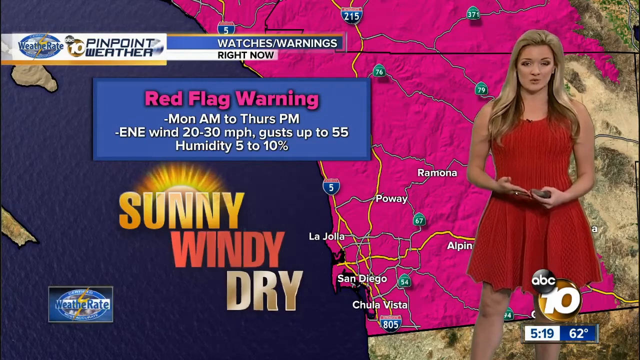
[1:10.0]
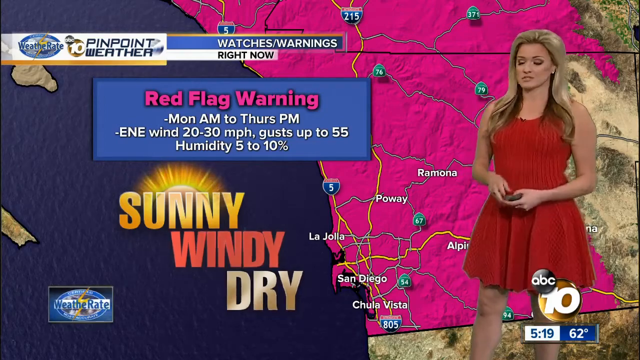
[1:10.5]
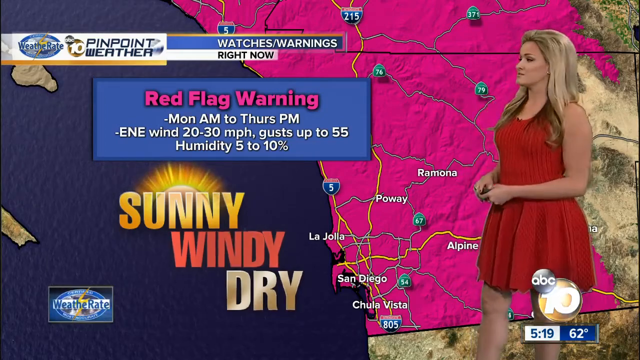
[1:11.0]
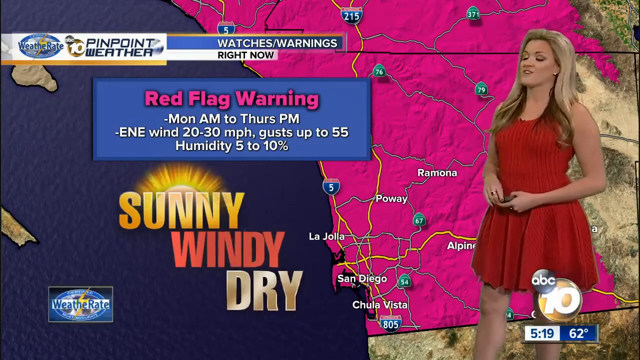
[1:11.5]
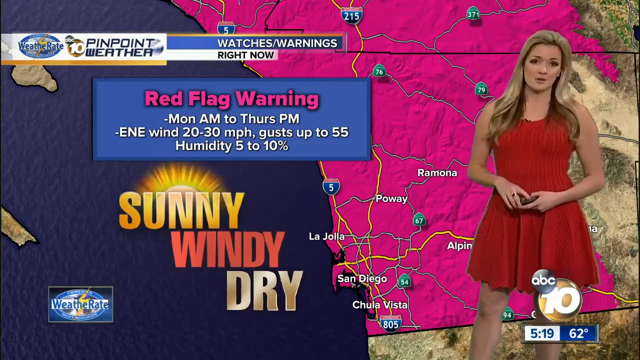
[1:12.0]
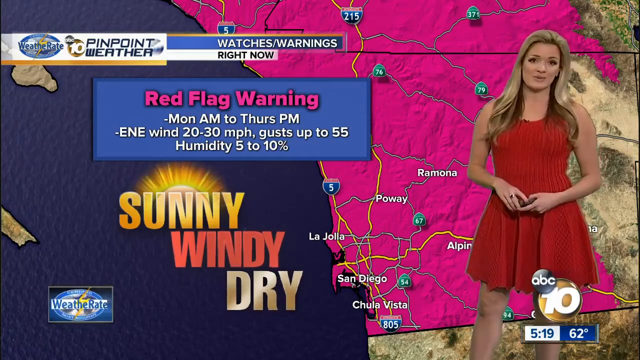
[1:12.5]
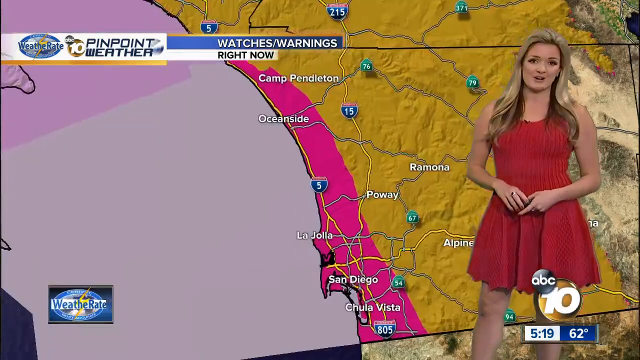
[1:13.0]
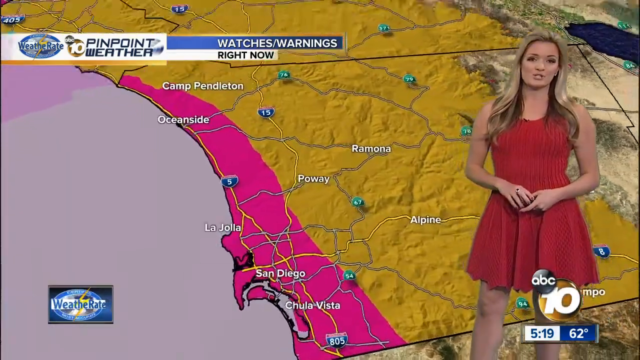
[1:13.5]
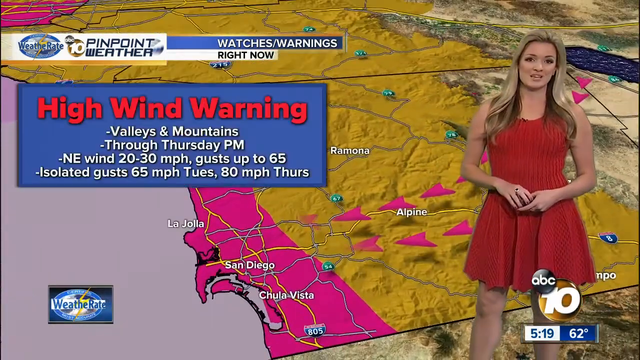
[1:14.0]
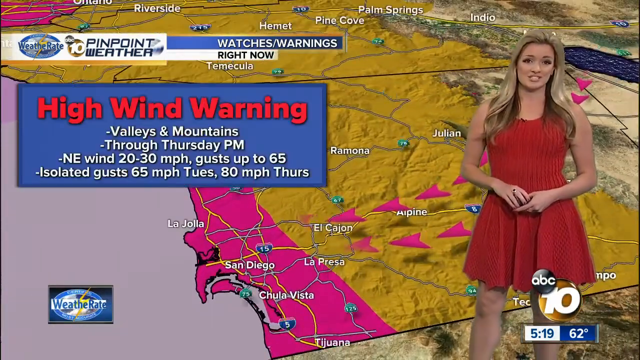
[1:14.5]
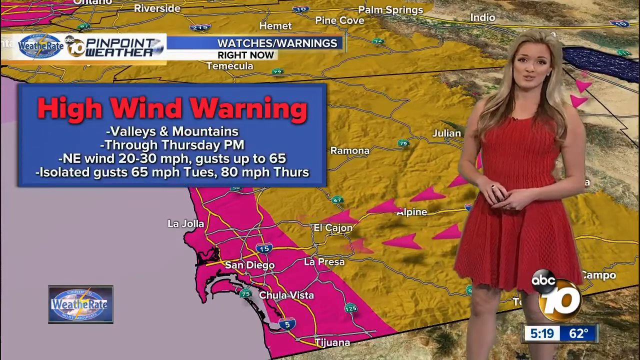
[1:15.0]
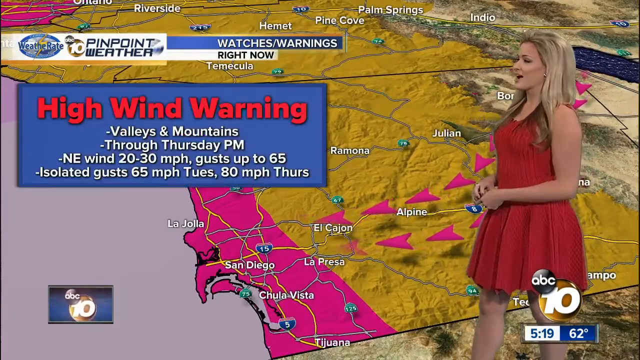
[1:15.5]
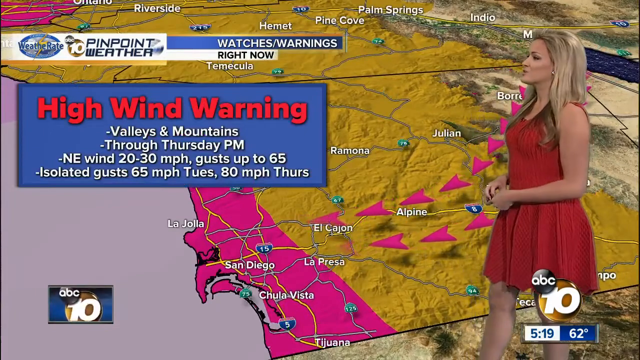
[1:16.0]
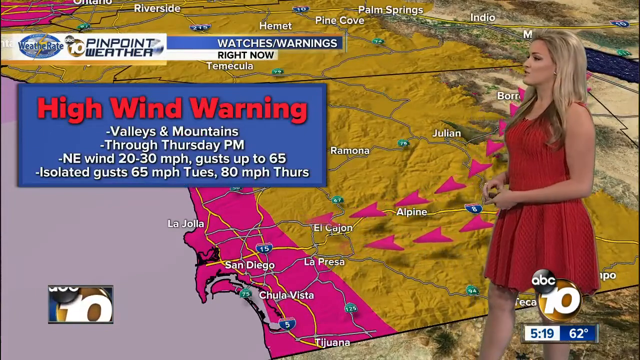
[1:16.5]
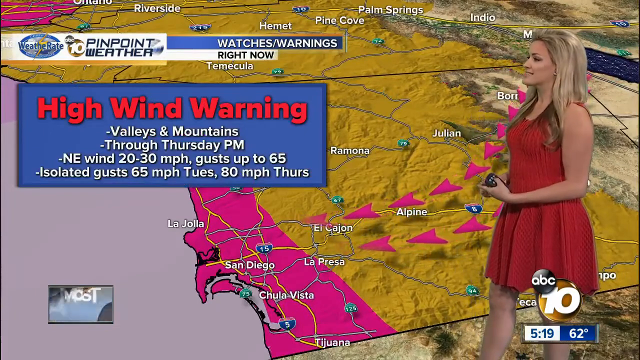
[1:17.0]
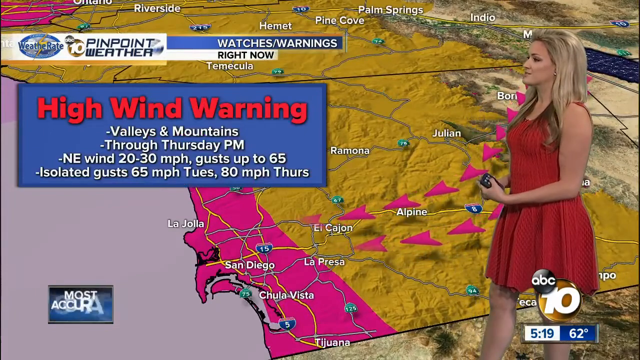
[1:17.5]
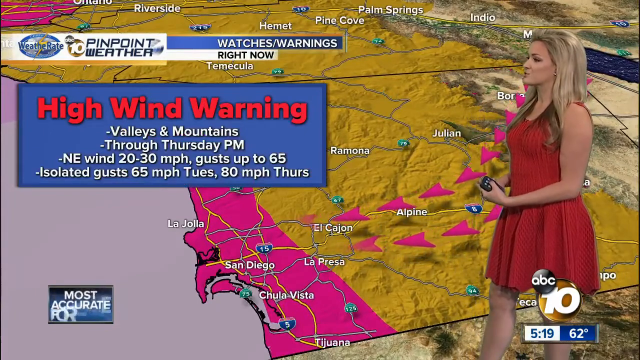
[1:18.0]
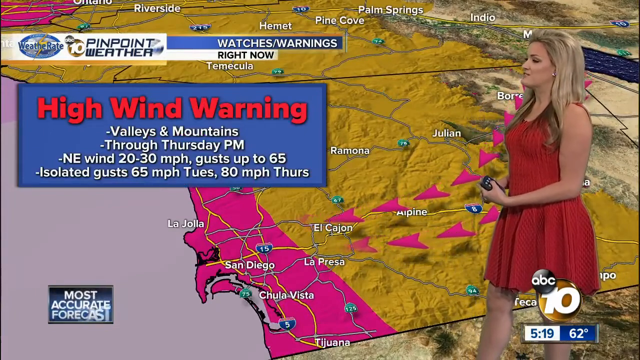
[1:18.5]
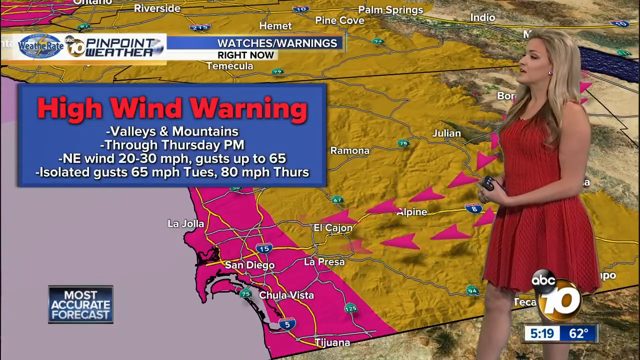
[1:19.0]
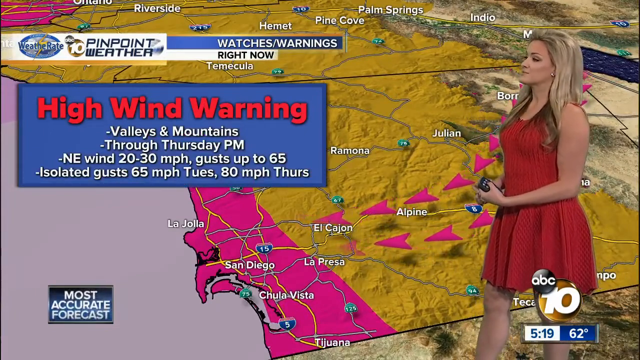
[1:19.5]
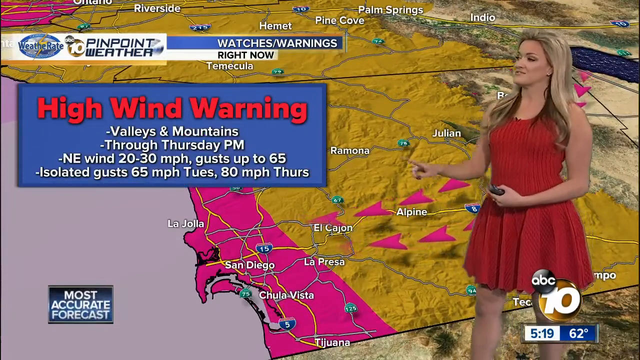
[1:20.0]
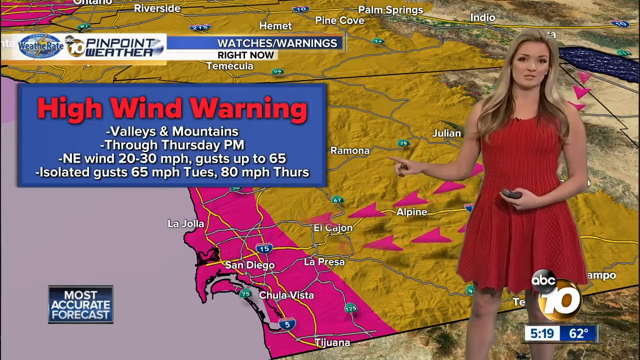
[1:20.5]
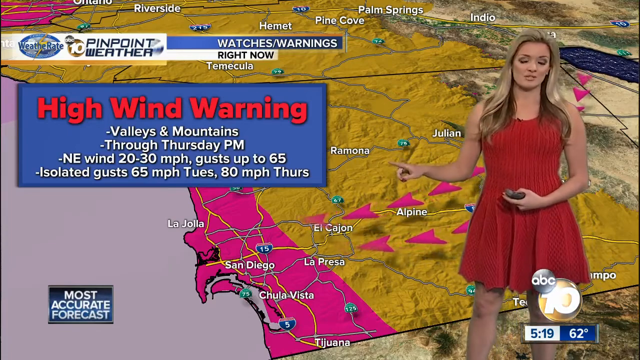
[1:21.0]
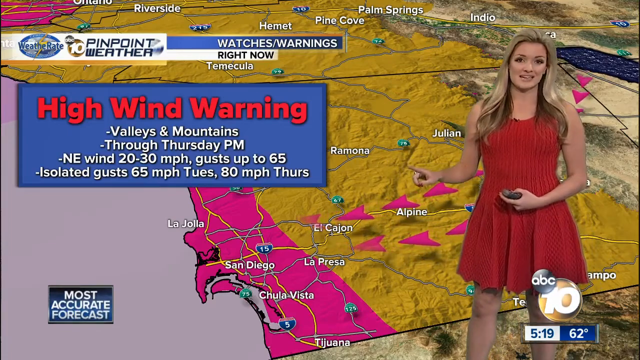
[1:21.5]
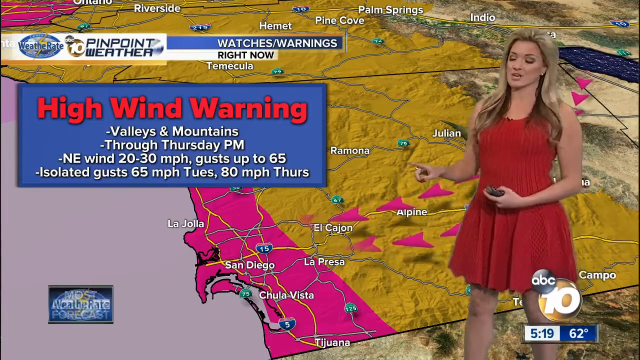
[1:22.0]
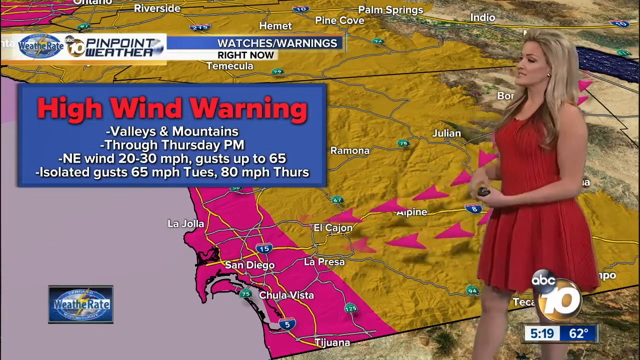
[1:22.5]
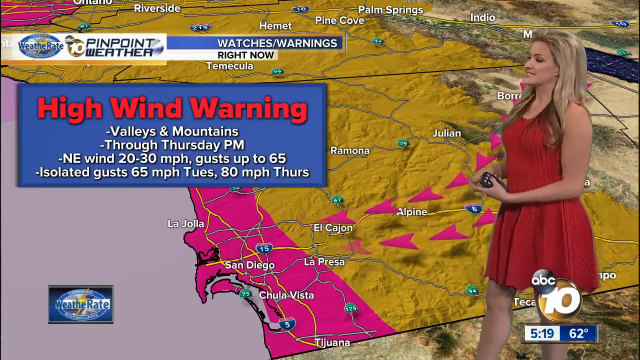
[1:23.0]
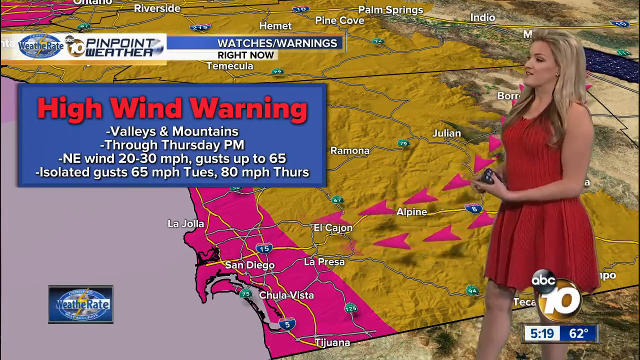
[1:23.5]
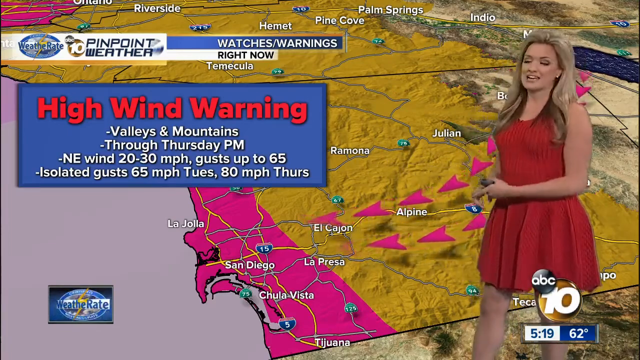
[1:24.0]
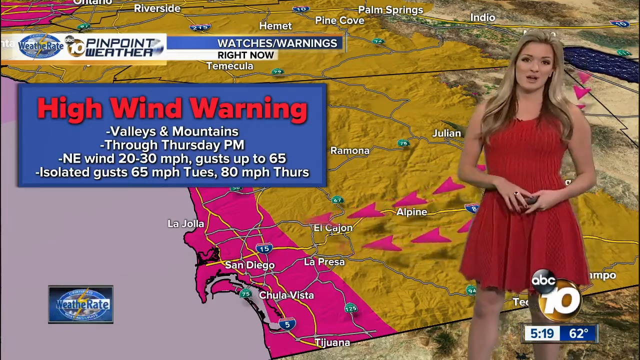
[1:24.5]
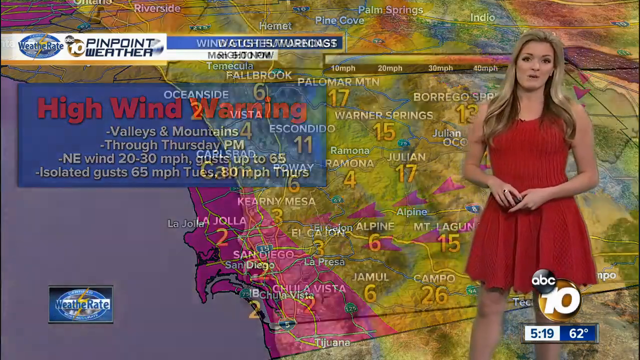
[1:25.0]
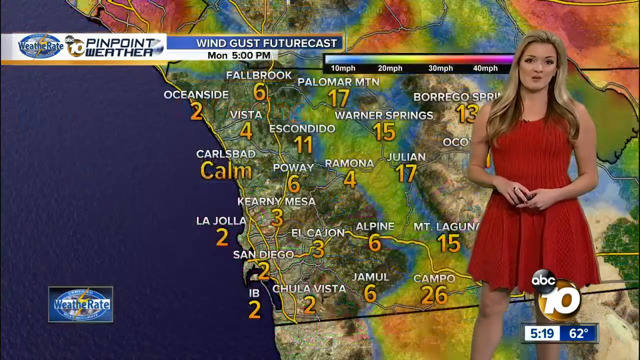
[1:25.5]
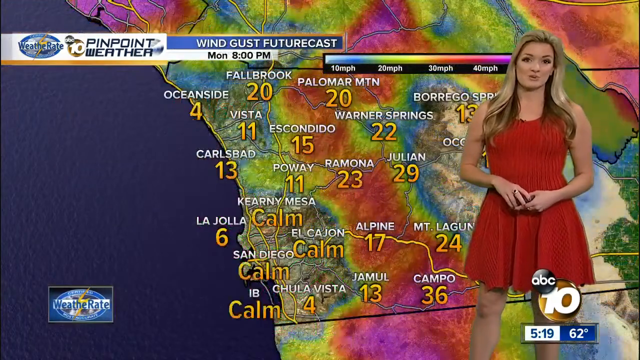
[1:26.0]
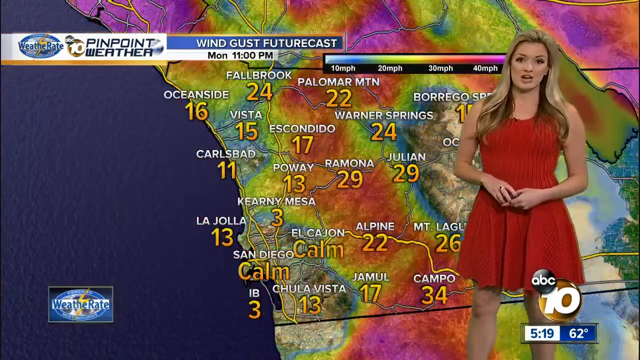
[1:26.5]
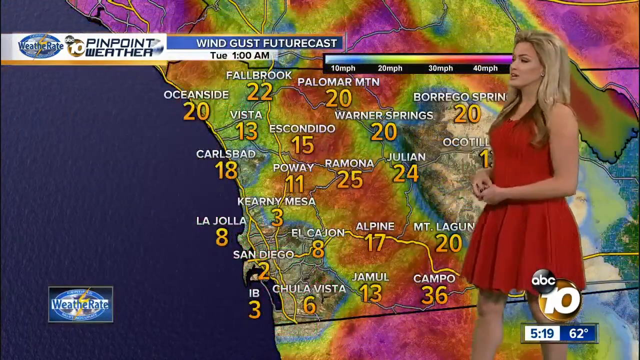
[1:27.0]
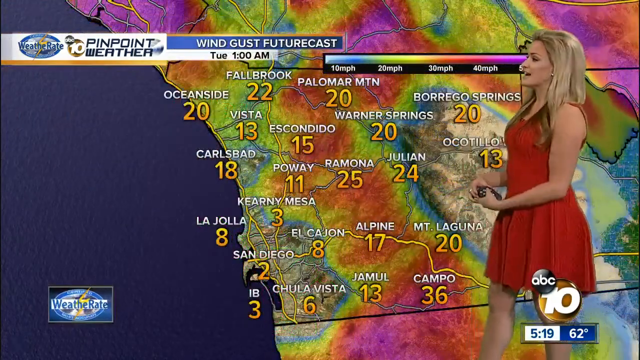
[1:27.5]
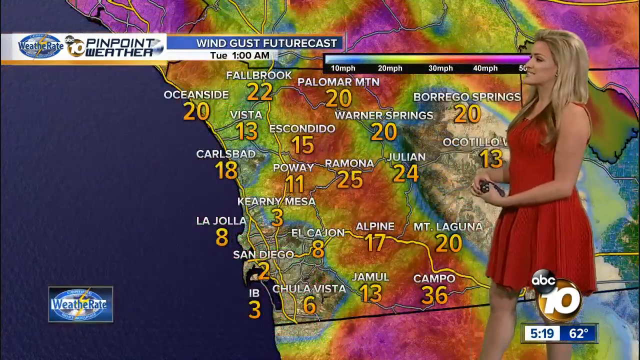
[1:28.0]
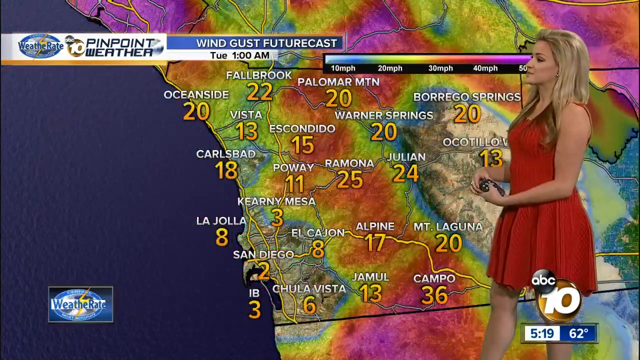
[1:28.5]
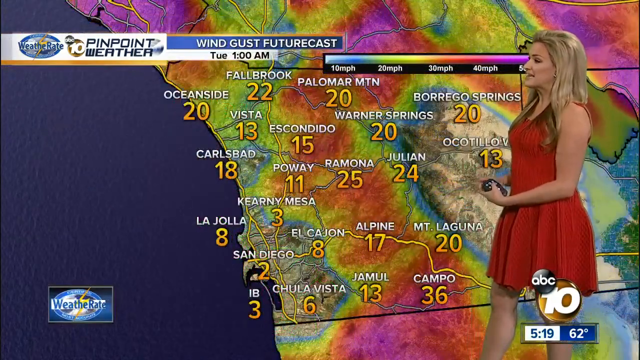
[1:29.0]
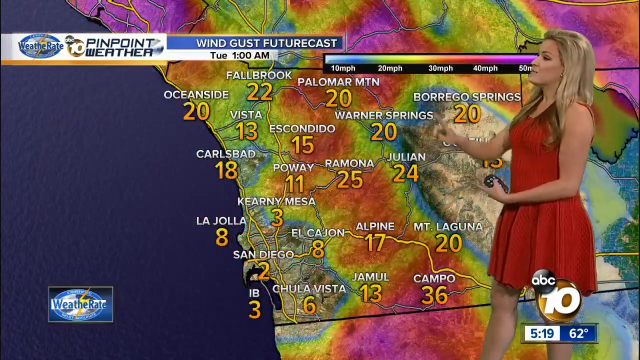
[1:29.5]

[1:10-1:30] She continues talking to the viewer as the background graphic changes. The warning changes from "red flag warning" to "high wind warning," with similar information below it, and the bright pink topographical map is replaced by a mustard-yellow map with pink only on the coast, with two rows of bright pink arrows behind her coming down and pointing left toward the San Diego area. The scene then switches to a big map with many current temperatures and city names, labeled at the top "wind gust future cast." In the lower left, a logo alternates between the small lightning logo, text reading "most accurate forecast," "weather rate," and occasionally some station information. In the lower right is the number 10 in a circle with the ABC circle to its left, and the time and temperature beneath.